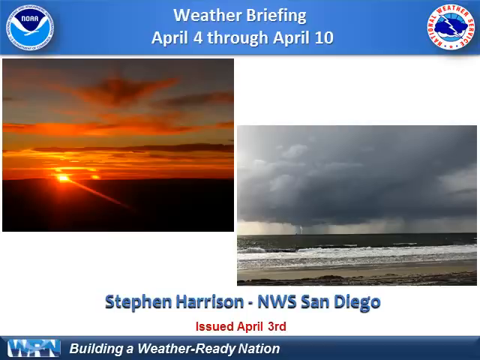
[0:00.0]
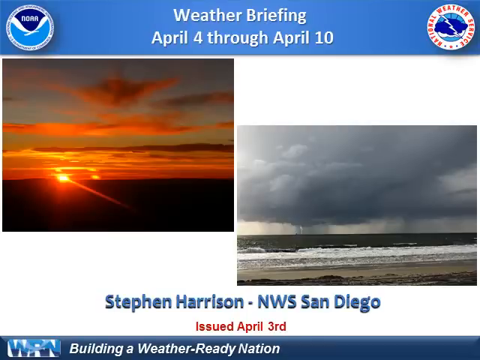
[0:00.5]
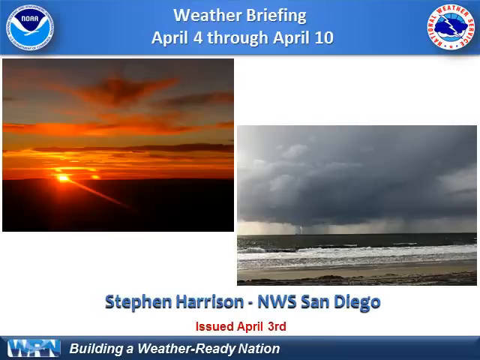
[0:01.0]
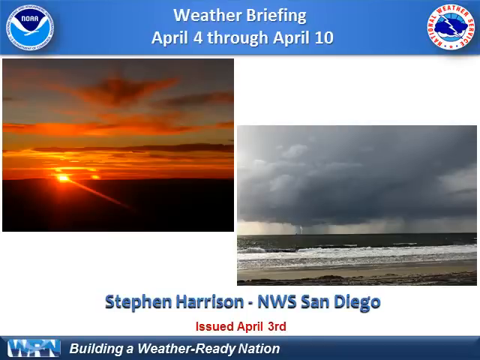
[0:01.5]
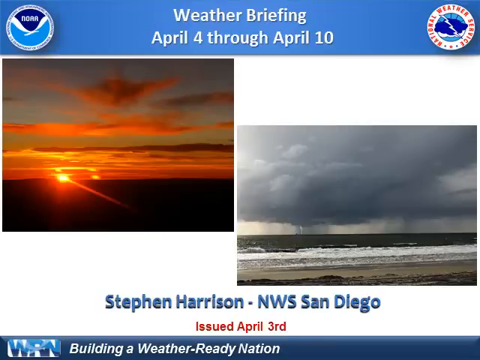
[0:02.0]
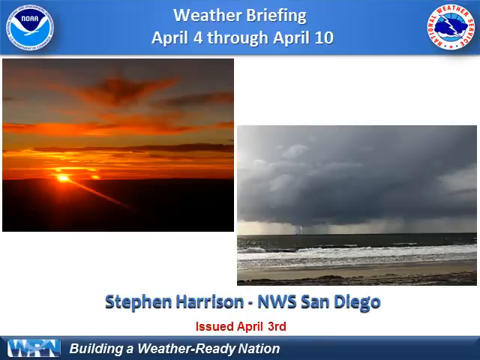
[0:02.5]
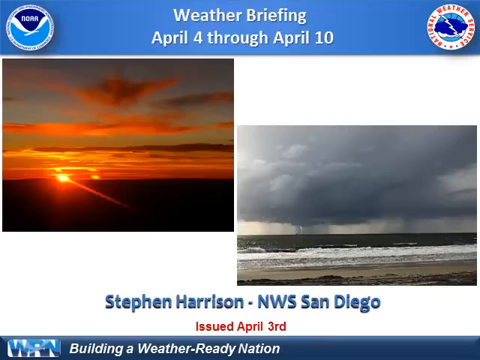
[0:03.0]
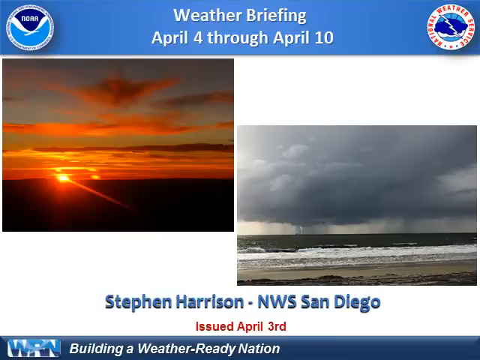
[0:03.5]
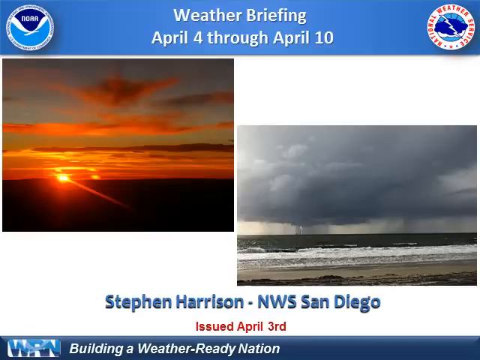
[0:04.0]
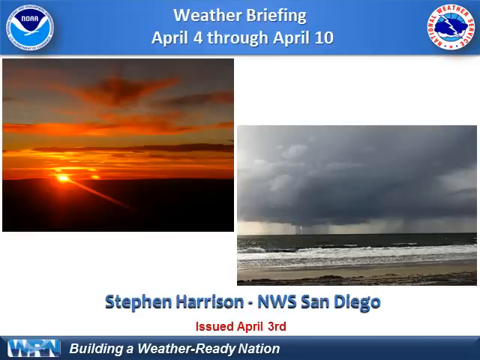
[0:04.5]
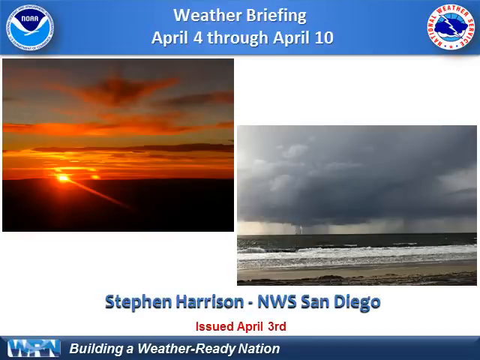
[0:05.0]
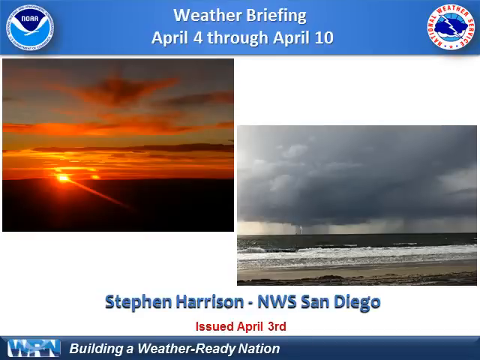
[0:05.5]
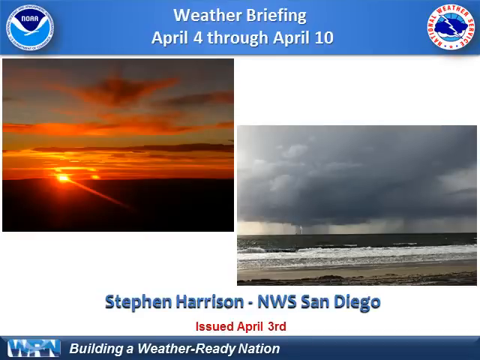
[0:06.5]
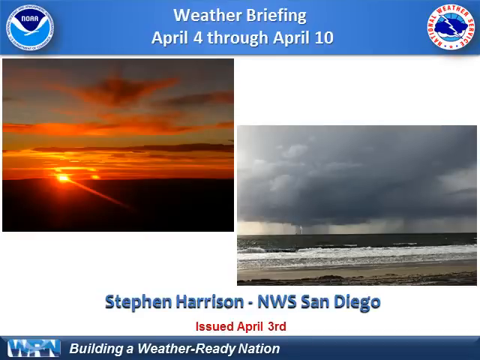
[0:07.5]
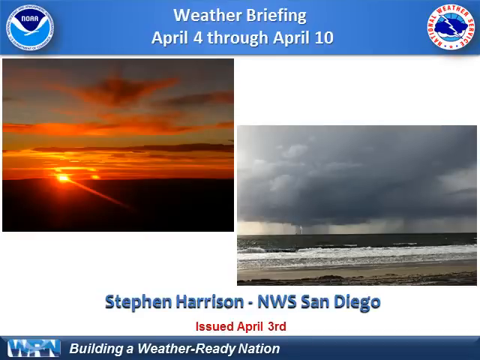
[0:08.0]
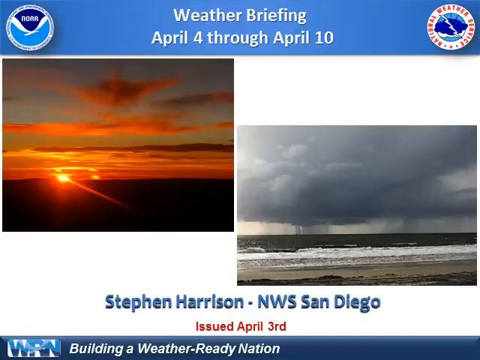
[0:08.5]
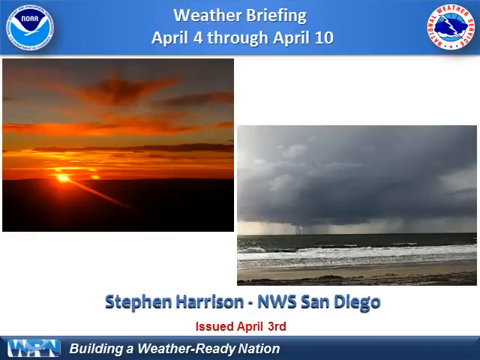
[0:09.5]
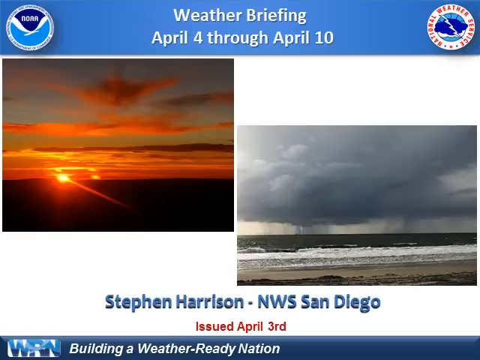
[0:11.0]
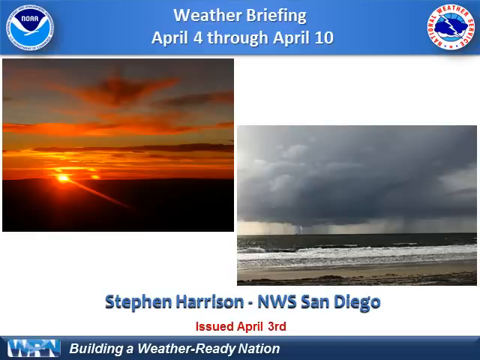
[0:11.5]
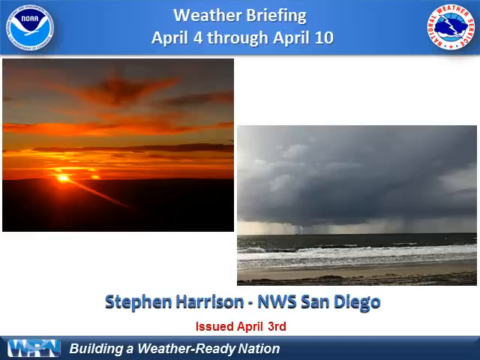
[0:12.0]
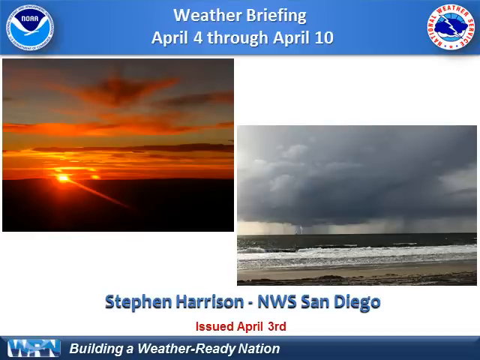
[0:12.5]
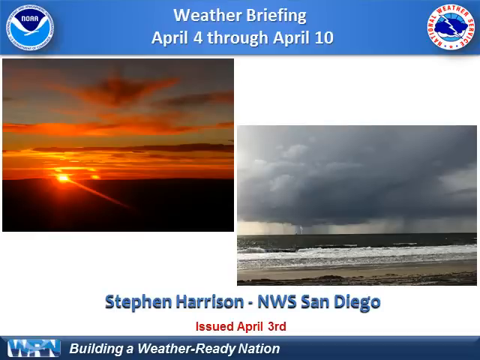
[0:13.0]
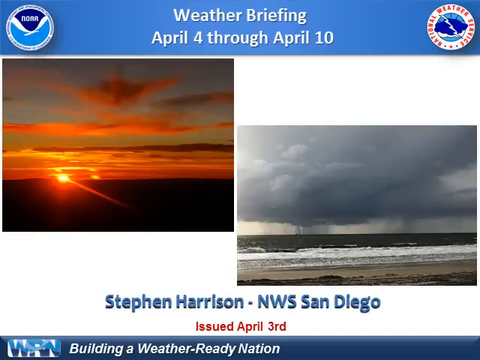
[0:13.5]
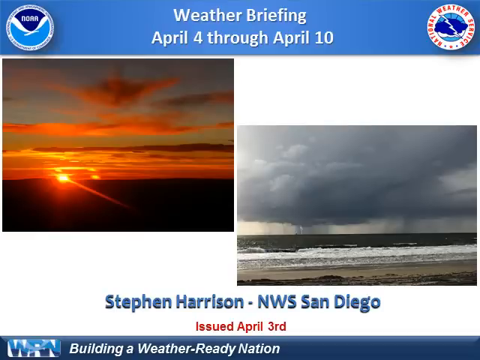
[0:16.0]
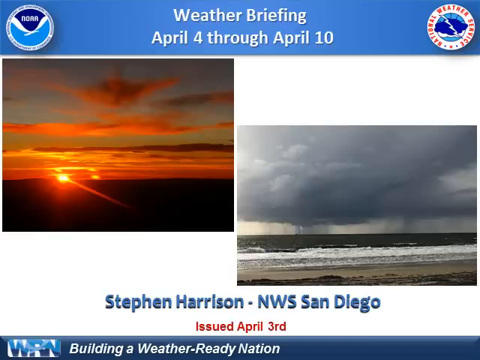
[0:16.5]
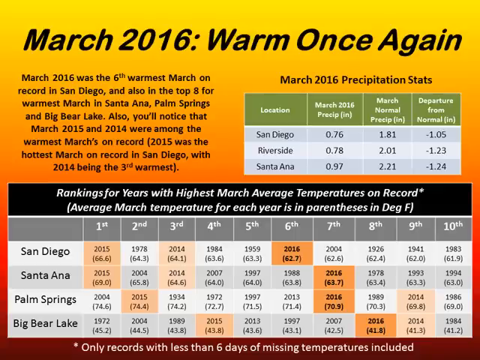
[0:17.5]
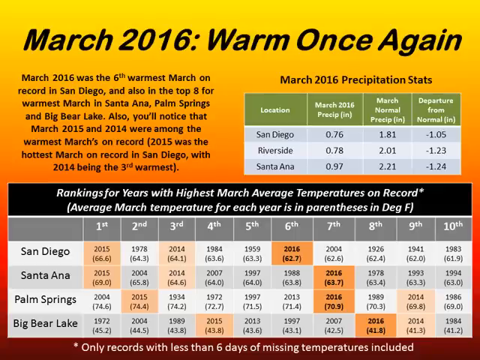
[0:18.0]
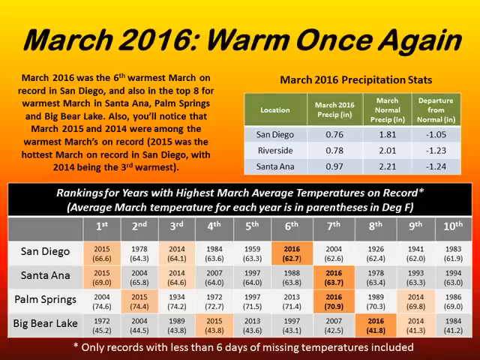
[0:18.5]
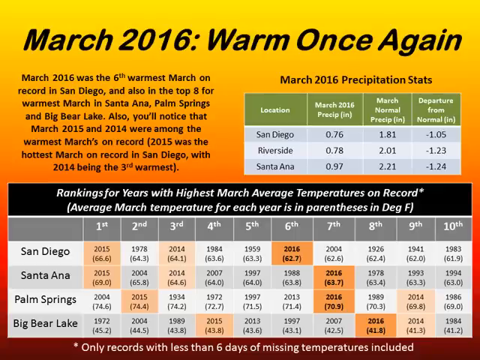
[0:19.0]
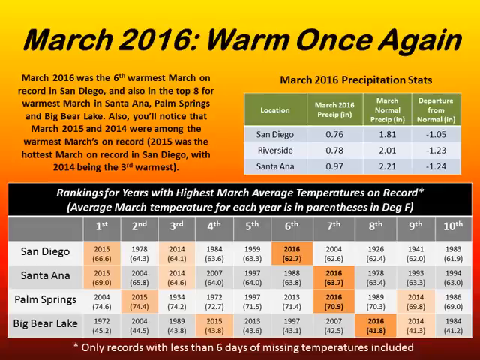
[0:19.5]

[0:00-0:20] A screen shows two pictures. On the left is a sunset with a red sky and a yellow sun setting over the horizon. On the right is a storm at sea, with dark clouds, rain falling onto the distant ocean, and surf and sand near the bottom of the picture. At the top the text says "weather briefing, April 4th through April 10". At the bottom it says "Steven Harrison, NWS San Diego", and below that it says "issued April 3rd". The next screen has an orange and yellow, orange and red background with a block of text in front of it. At the top it says "March 2016, warm once again". In the middle near the top, on the right, is a chart of March 2016 precipitation stats for three locations: San Diego, Riverside, and Santa Ana. The bottom part shows rankings for years with the highest March average temperature on record for San Diego, Santa Ana, Palm Springs, and Big Bear Lake. In San Diego, 2016 is highlighted as the highest number, at 62.7, and 2016 is also marked for Santa Ana, Palm Springs, and Big Bear Lake.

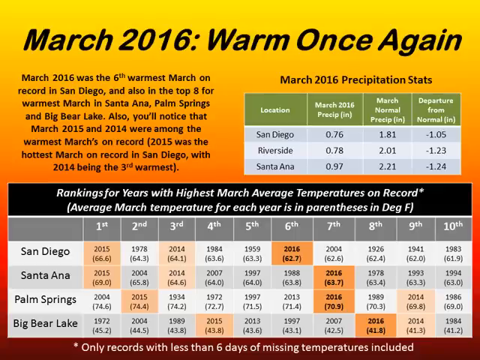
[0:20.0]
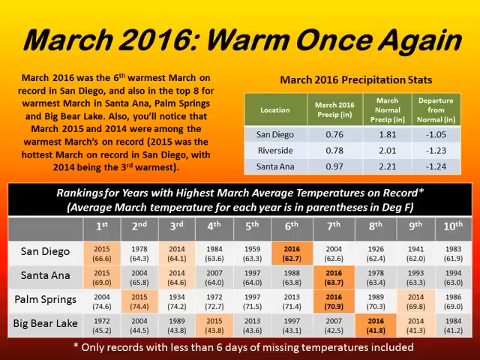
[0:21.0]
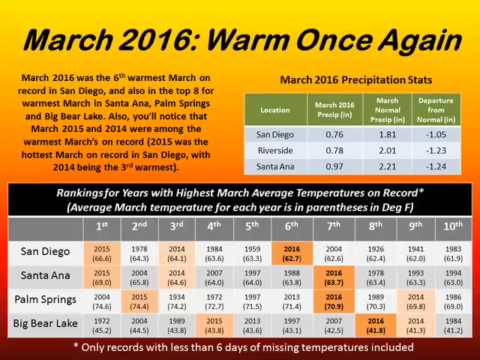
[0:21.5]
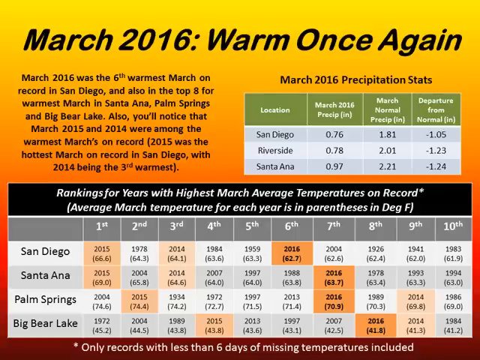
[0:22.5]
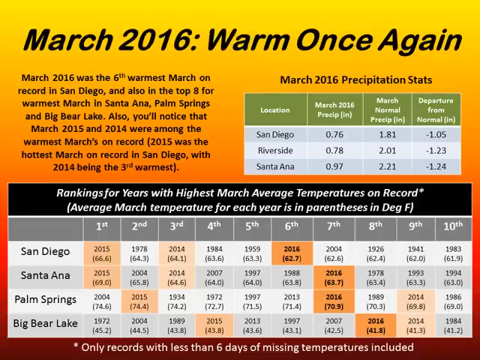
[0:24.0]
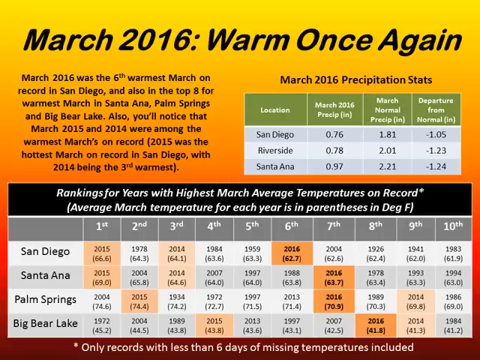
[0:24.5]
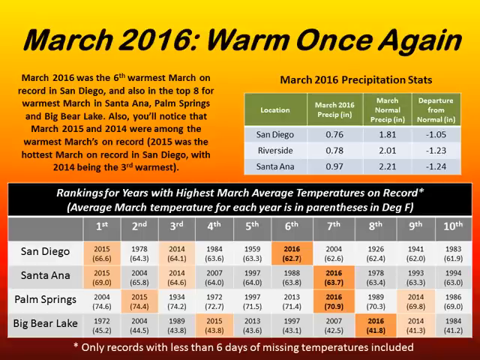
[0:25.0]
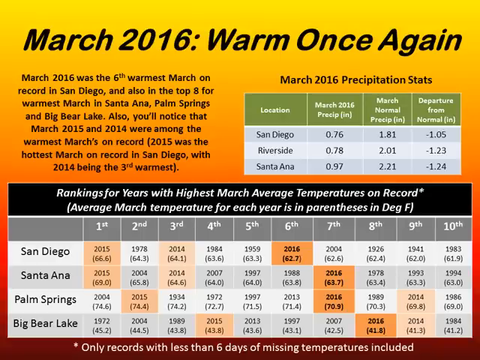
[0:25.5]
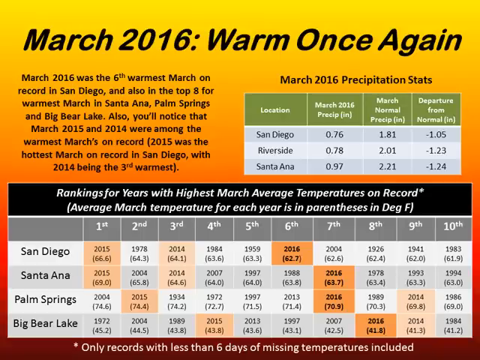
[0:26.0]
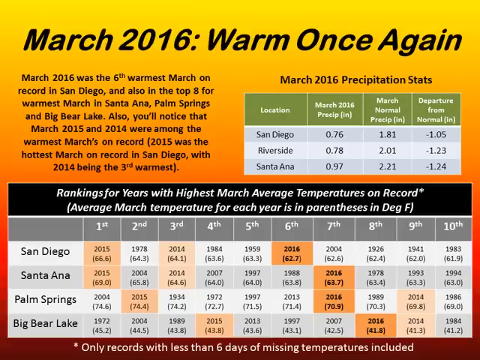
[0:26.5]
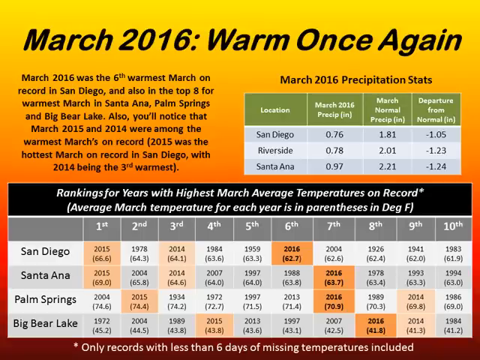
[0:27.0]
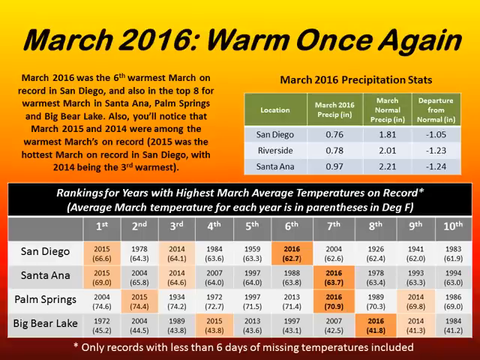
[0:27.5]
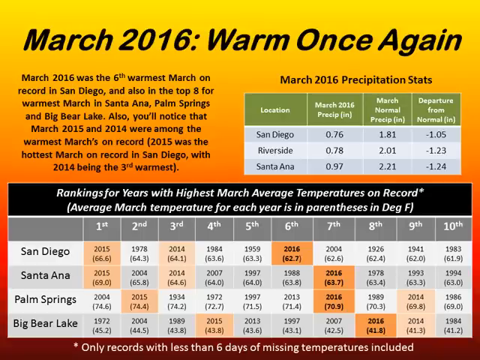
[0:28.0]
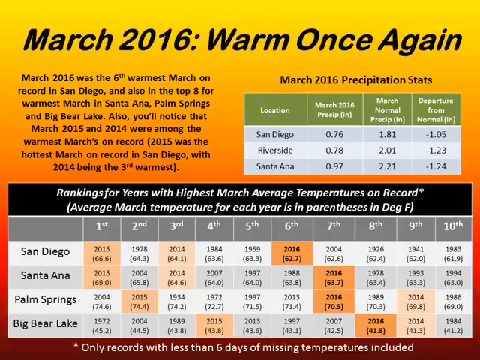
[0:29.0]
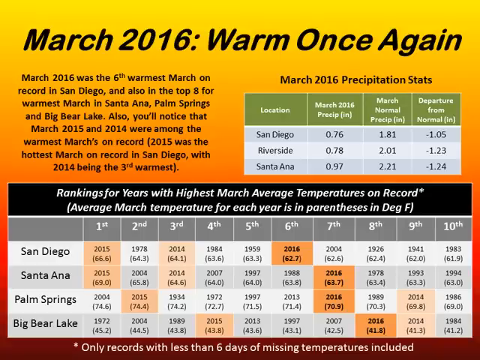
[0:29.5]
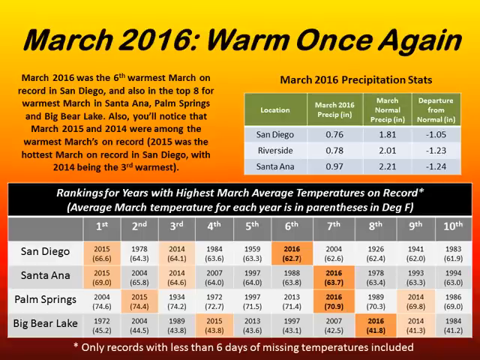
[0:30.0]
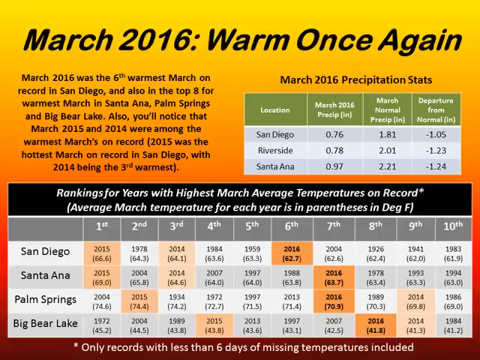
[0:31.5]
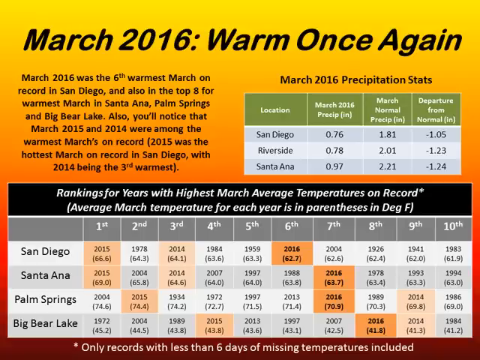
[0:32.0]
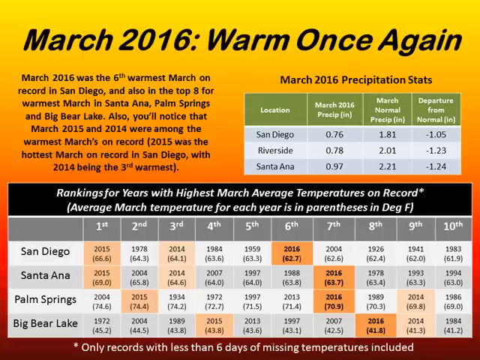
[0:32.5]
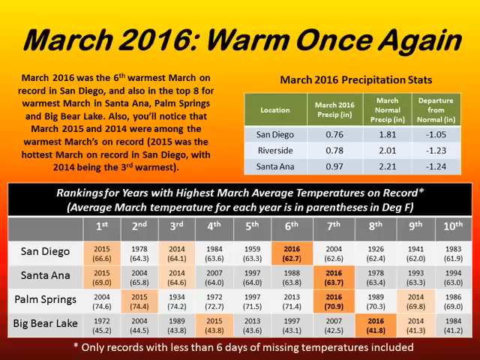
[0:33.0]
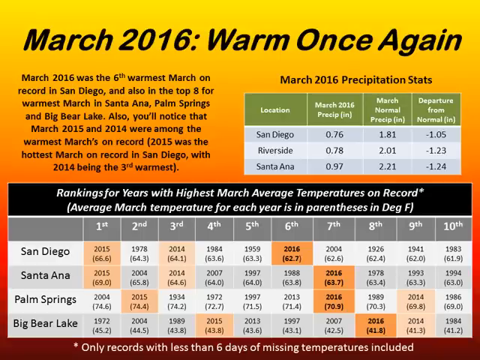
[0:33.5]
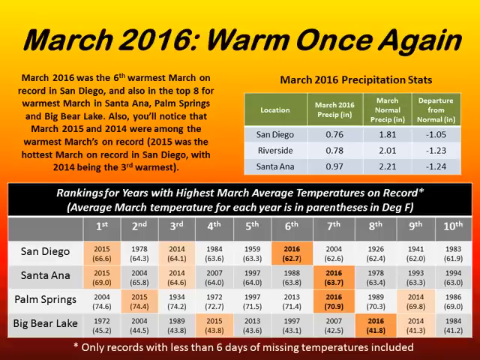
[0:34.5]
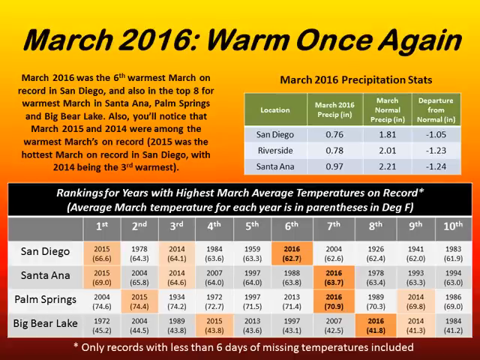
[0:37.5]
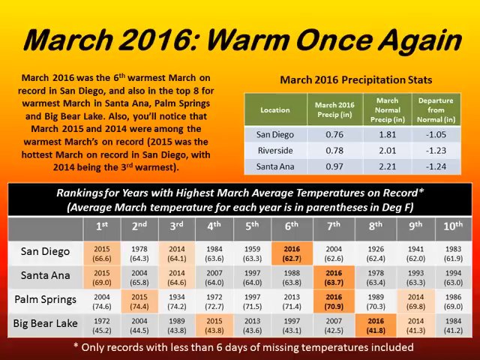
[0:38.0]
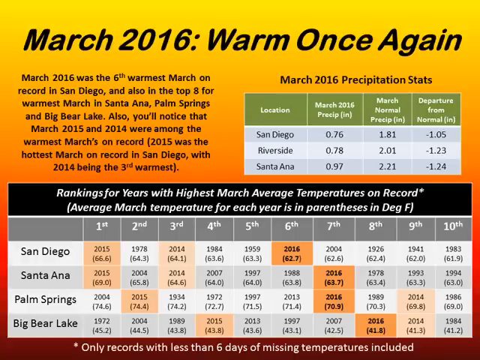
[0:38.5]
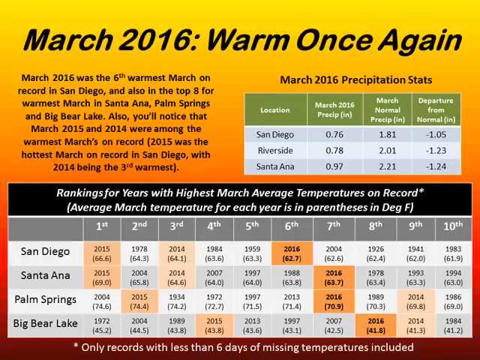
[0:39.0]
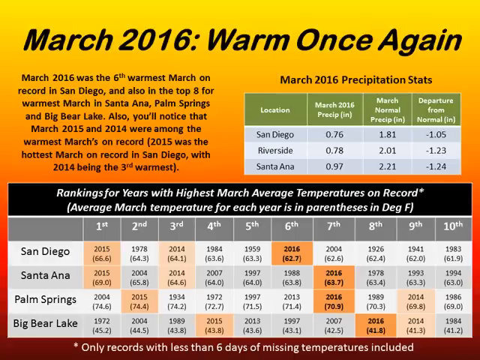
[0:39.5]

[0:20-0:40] A chart has a background that is yellow at the top, orange in the middle, and red at the bottom, eventually becoming black. The title is "March 2016 warm once again". A paragraph on the left is about March 2016 being the sixth warmest March on record in San Diego and various other cities. On the right, a small chart says "March 2016 precipitation stats" and gives numbers for San Diego, Riverside, and Santa Ana. Near the bottom are statistics for the highest March average temperature on record for San Diego, Santa Ana, Palm Springs, and Big Bear Lake, with March 2016 marked for all four cities: San Diego at 62.7, the 6th highest; Santa Ana at 63.7, the 7th highest; Palm Springs at 70.9, the 7th highest; and Big Bear Lake at 41.3, the 8th highest.